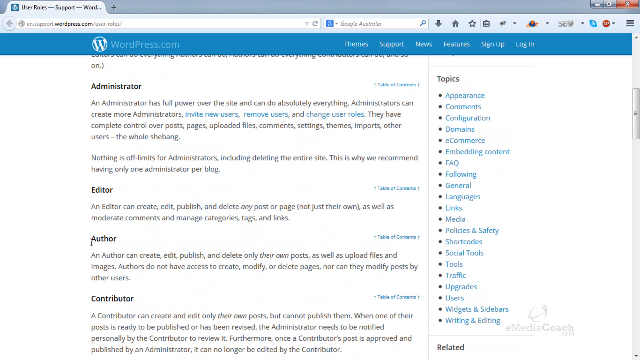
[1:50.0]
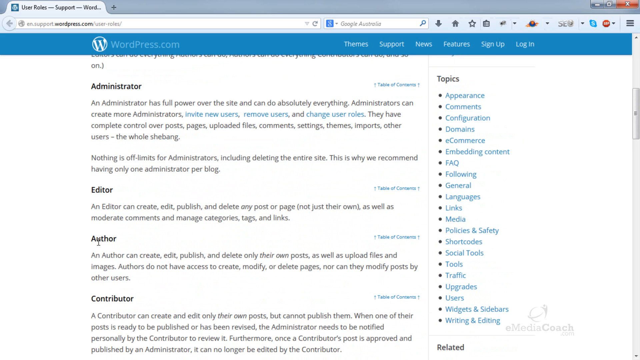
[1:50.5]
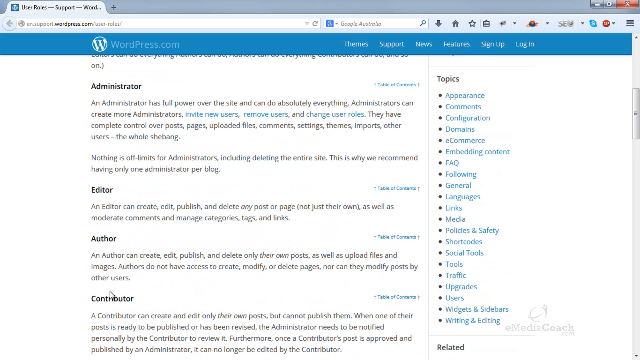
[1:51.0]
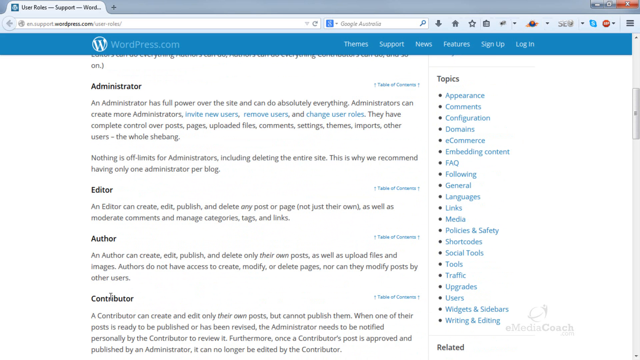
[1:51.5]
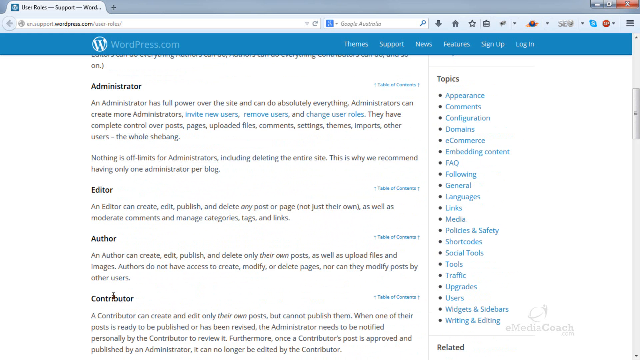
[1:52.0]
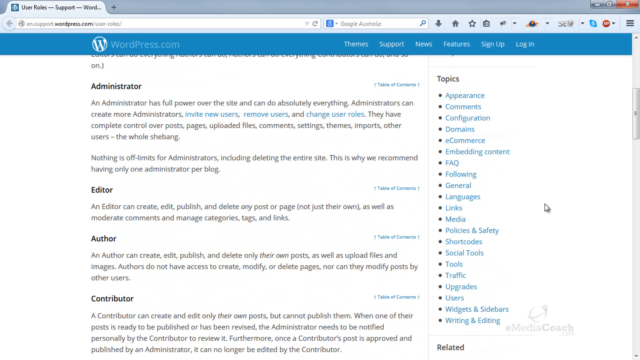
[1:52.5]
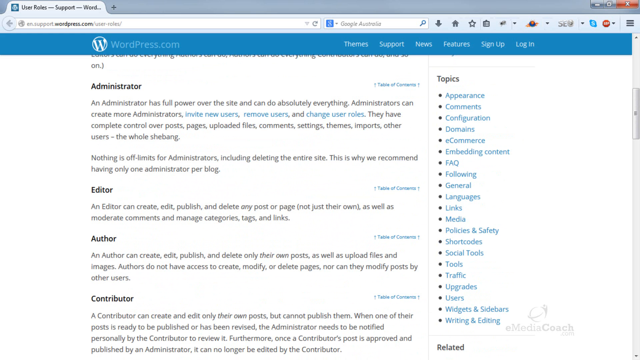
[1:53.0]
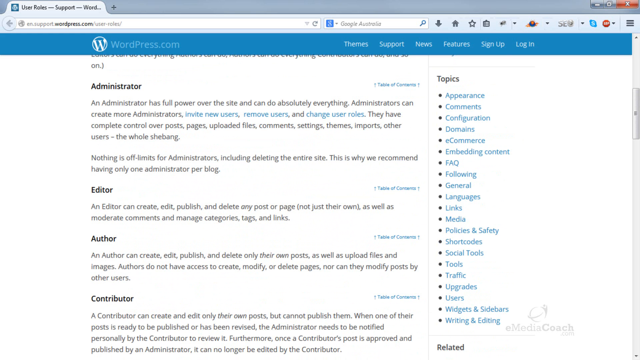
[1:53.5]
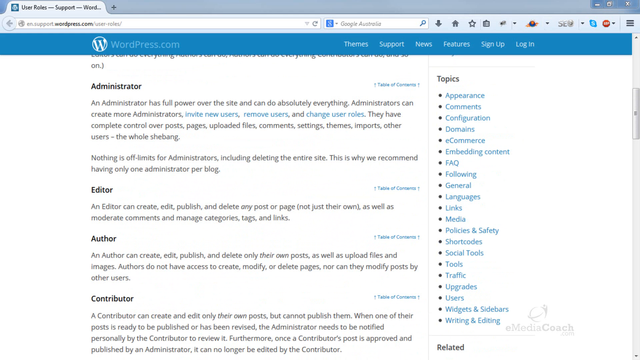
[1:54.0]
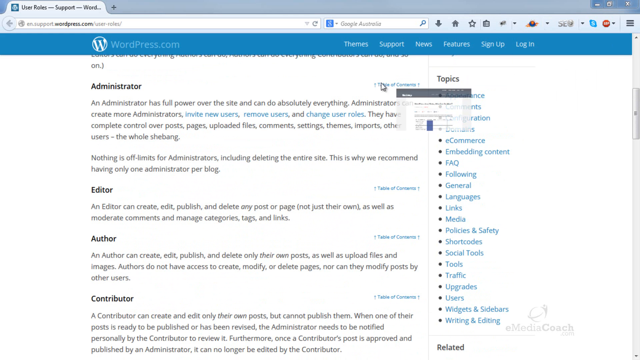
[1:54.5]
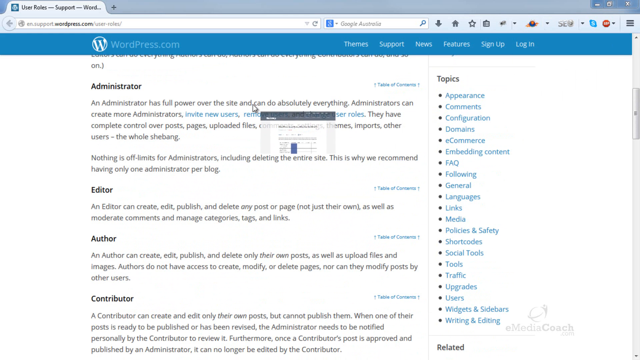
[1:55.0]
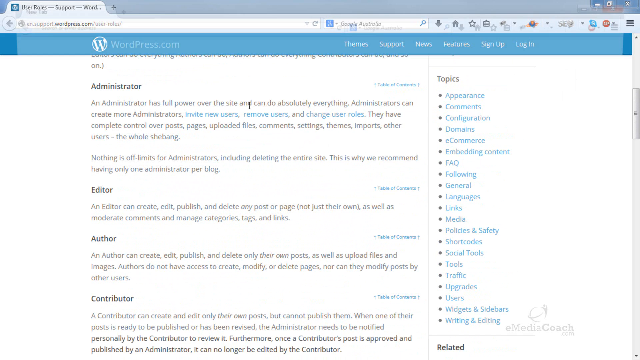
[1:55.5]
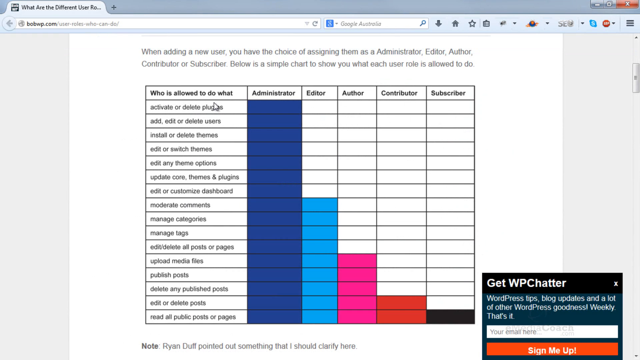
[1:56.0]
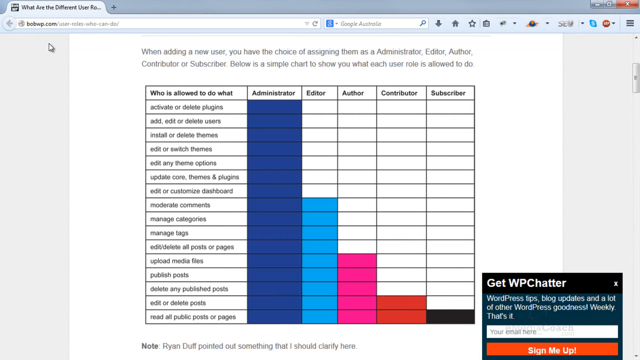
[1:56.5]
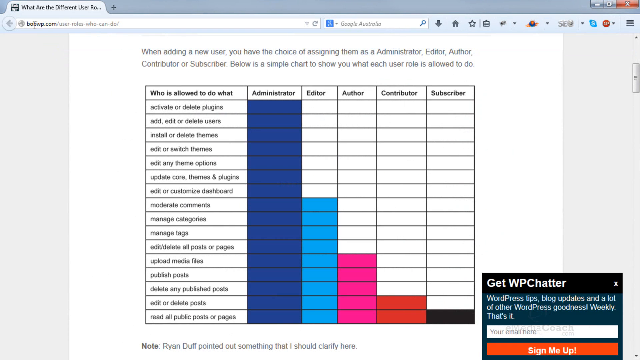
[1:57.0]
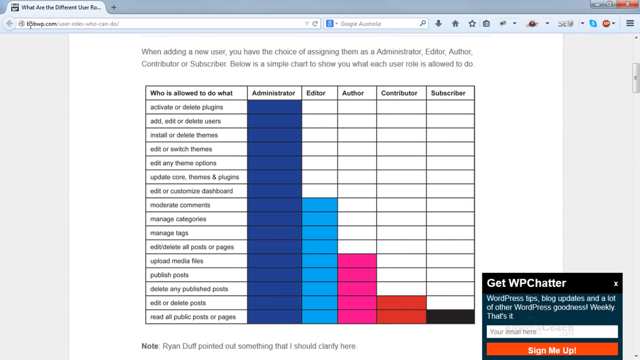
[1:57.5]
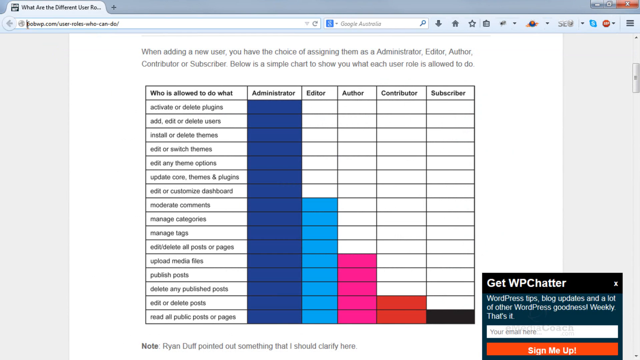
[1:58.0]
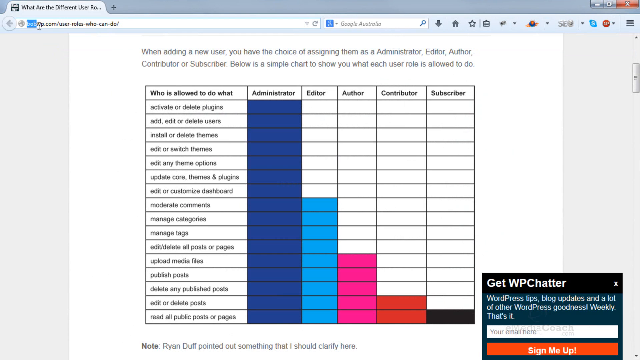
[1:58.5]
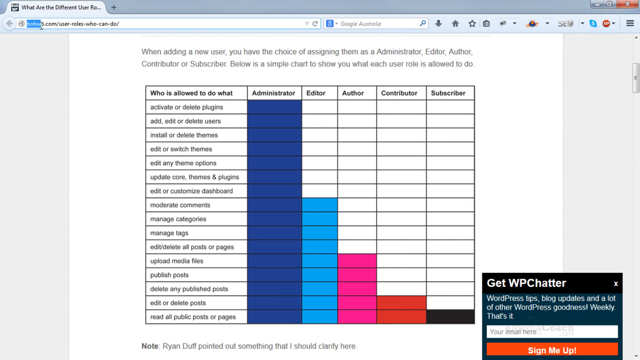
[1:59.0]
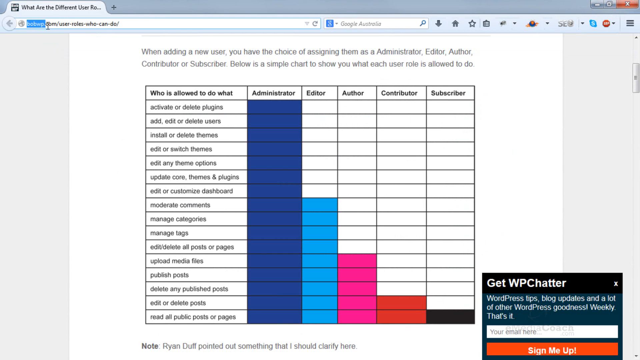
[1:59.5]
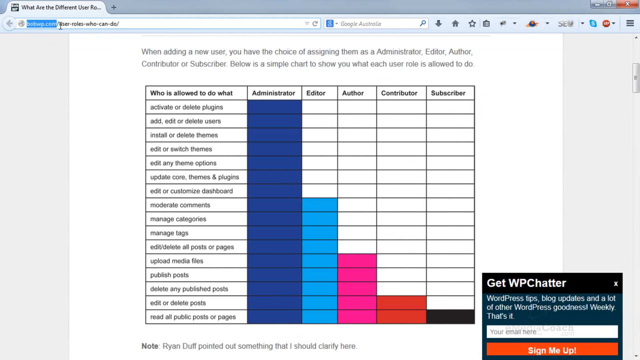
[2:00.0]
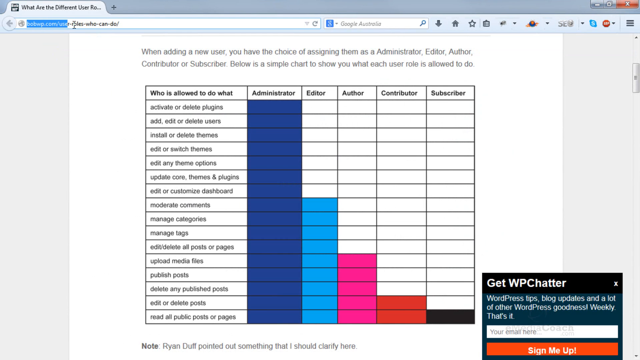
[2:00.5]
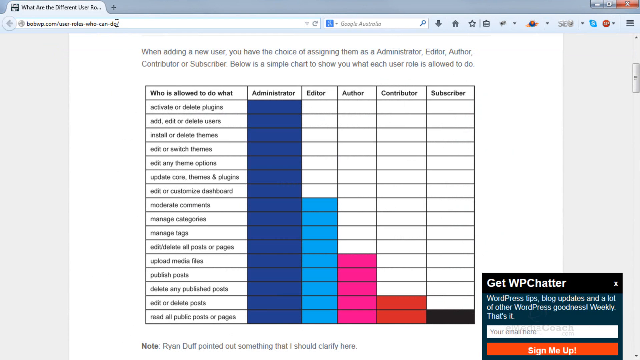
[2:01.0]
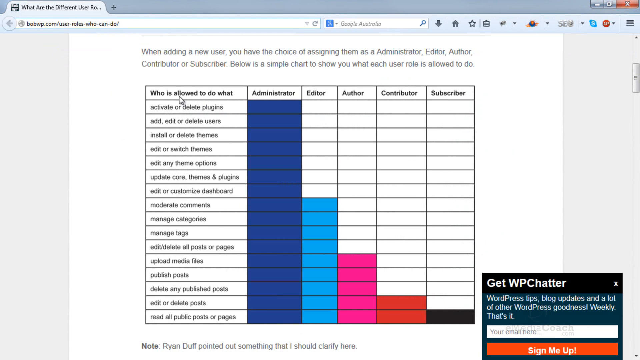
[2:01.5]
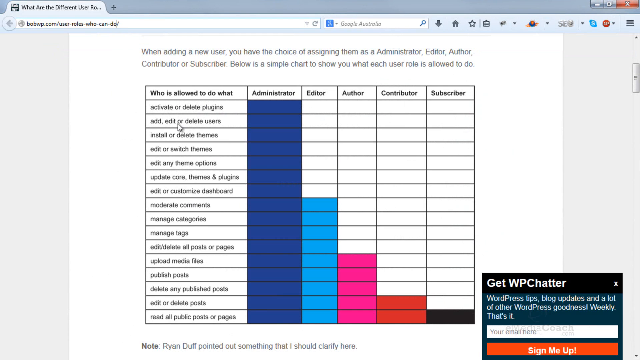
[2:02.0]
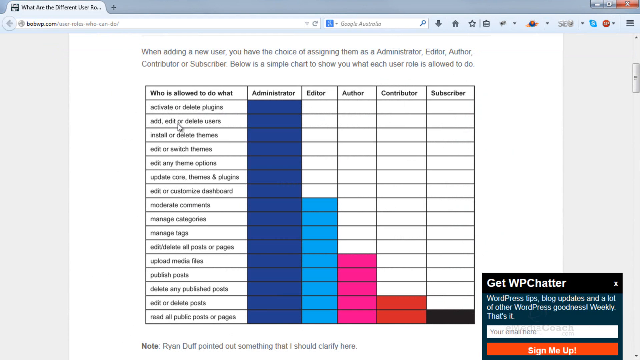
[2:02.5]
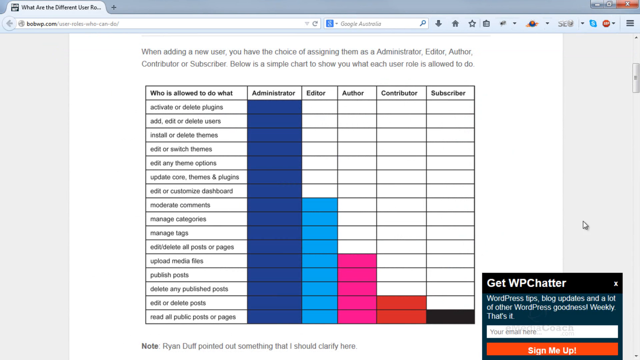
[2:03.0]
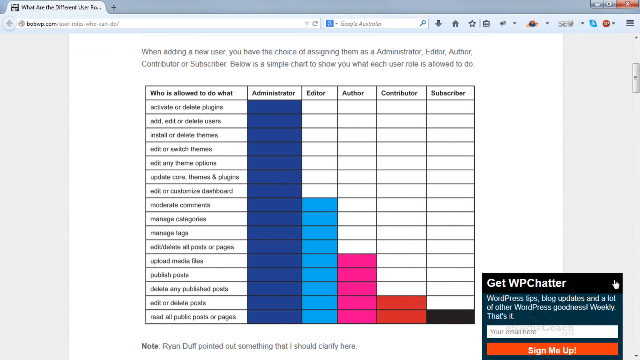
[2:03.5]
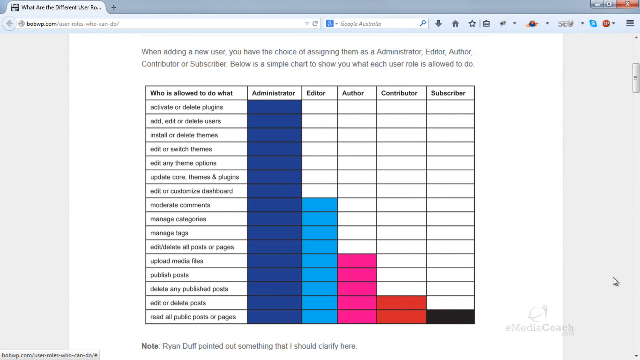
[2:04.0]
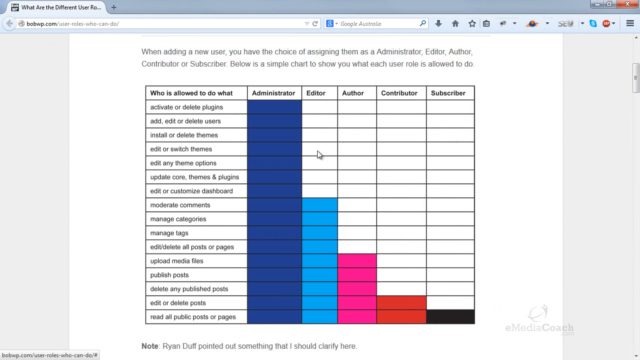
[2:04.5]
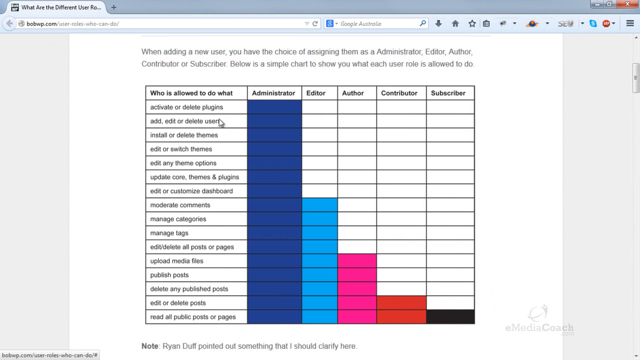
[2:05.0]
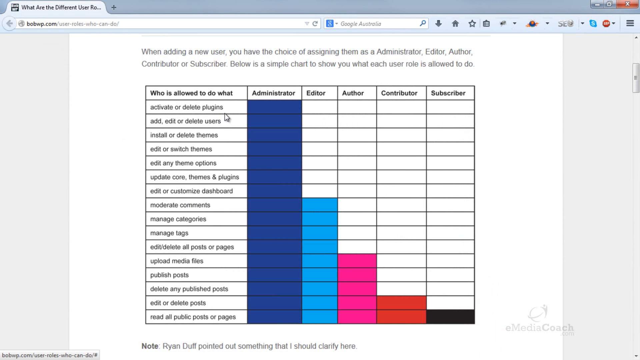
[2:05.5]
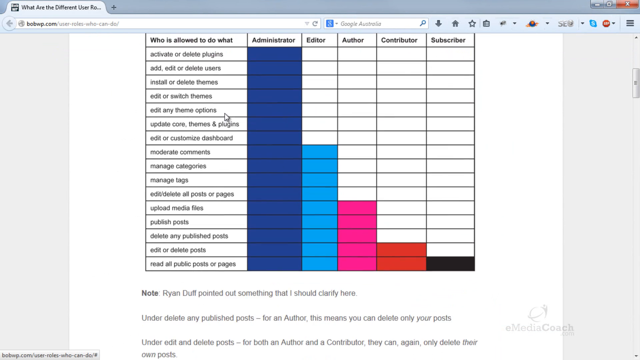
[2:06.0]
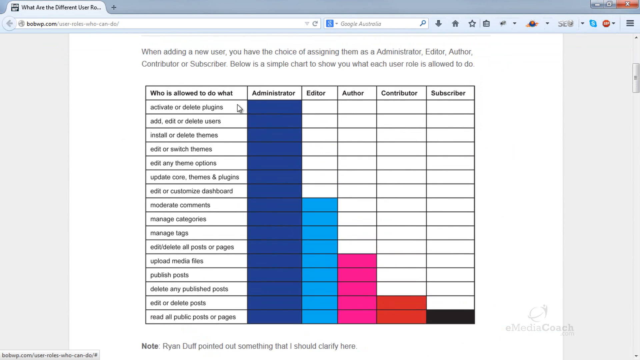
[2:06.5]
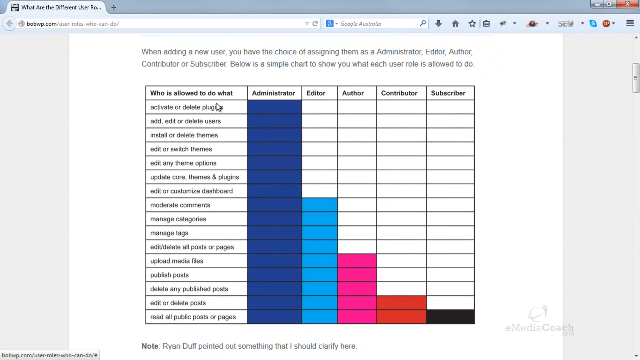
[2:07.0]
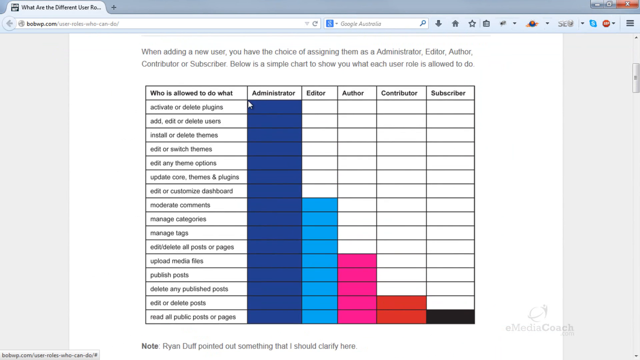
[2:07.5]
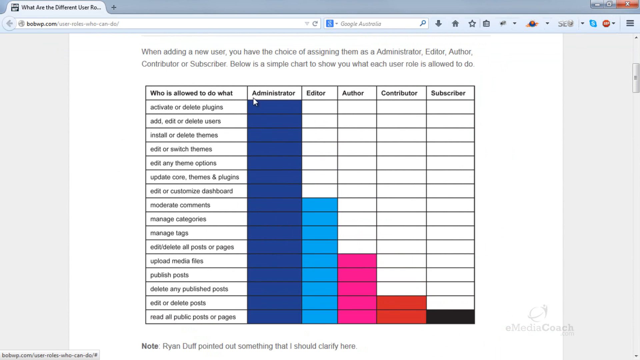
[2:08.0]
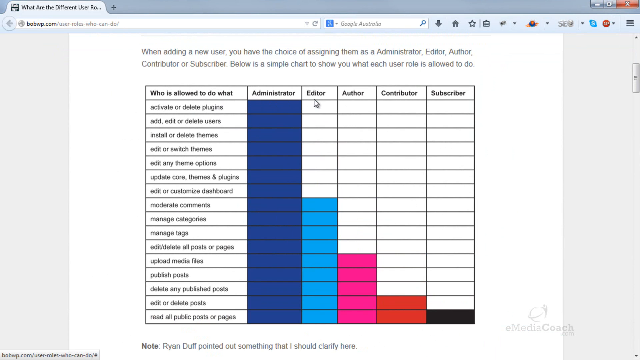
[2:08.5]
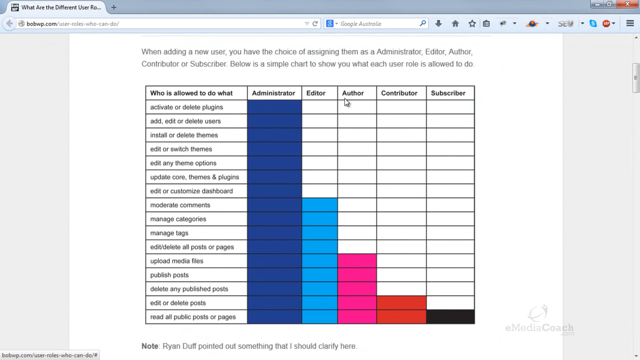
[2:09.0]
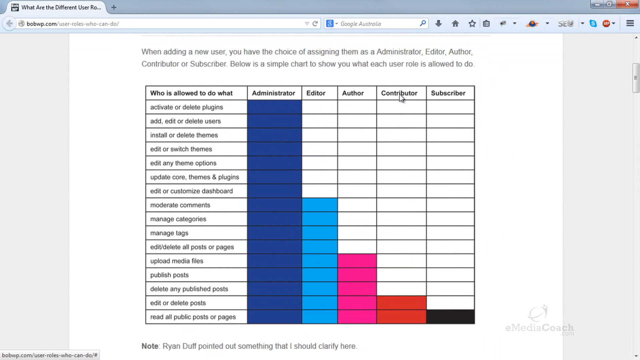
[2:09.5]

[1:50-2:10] The administrator part is still listed, reading: "An administrator has full power over the site and can do absolutely everything. Administrators can create more administrators, invite new users, remove users, change user roles. They have complete control over post pages, upload files, comments, settings, themes, imports, other users, the whole shebang. Nothing is off limits for administrators, including deleting the entire site. This is why we recommend having only one administrator per blog." Parts such as "remove users" and "change user roles" appear in blue. The person goes to the contributor section, moves the mouse toward the right side, and brings up another page or a chart. It reads: "When adding a new user you have the choice of assigning them as administrator, editor, author, contributor, or subscriber. Below is a simple chart to show what each role is allowed to do", with the heading "who is allowed to do what". The chart is color-coded, and the administrator has all blue on each part.